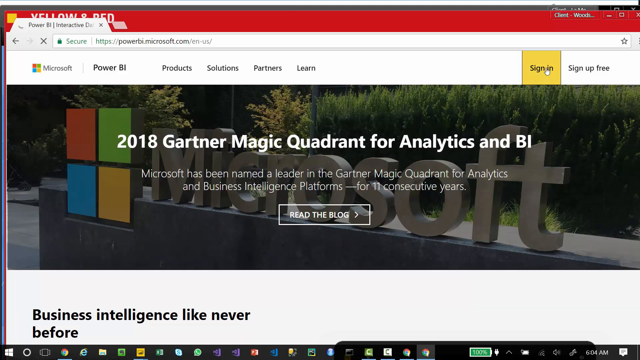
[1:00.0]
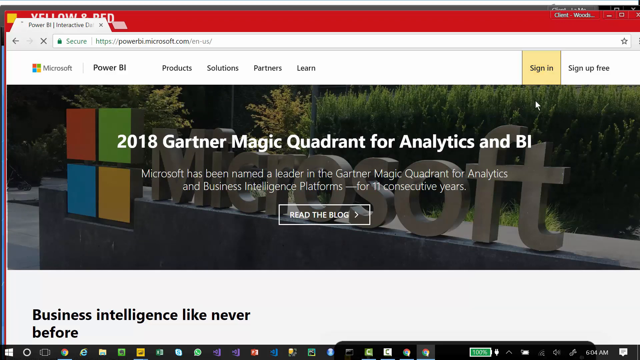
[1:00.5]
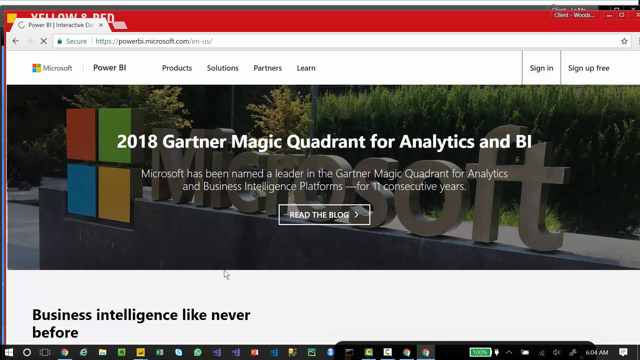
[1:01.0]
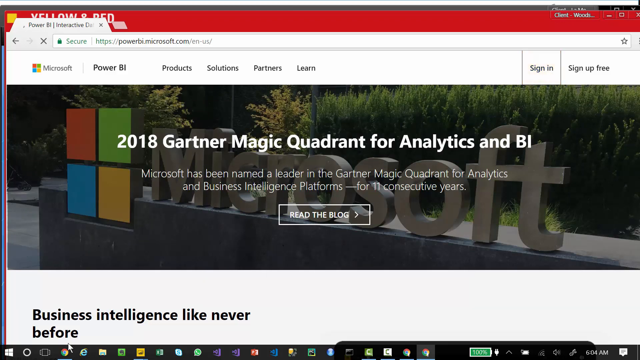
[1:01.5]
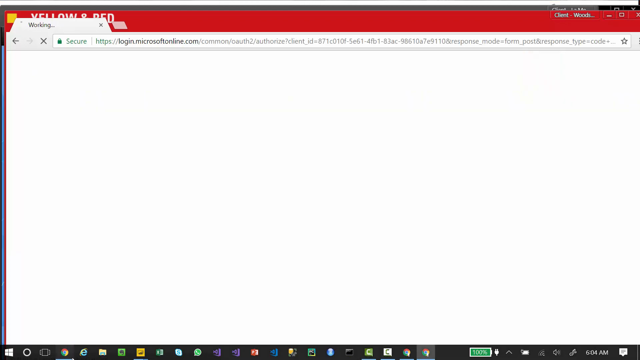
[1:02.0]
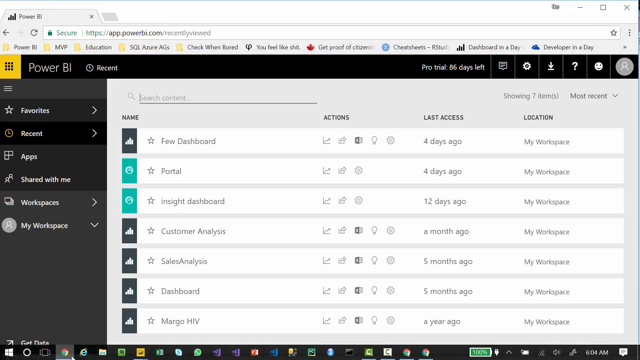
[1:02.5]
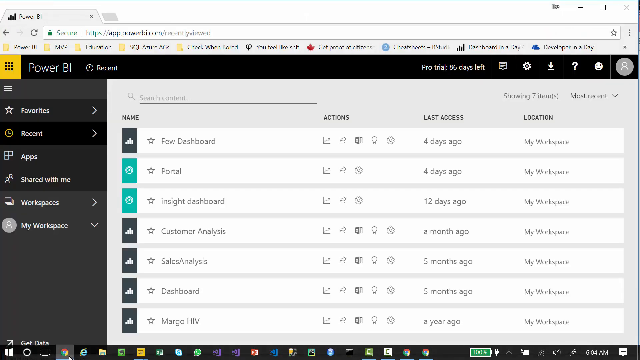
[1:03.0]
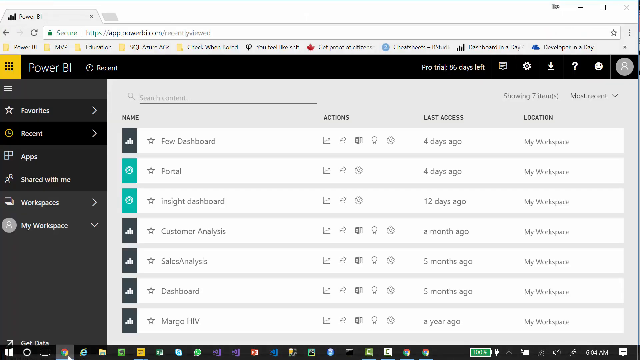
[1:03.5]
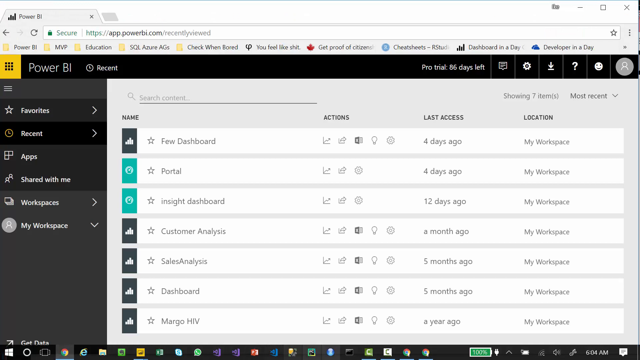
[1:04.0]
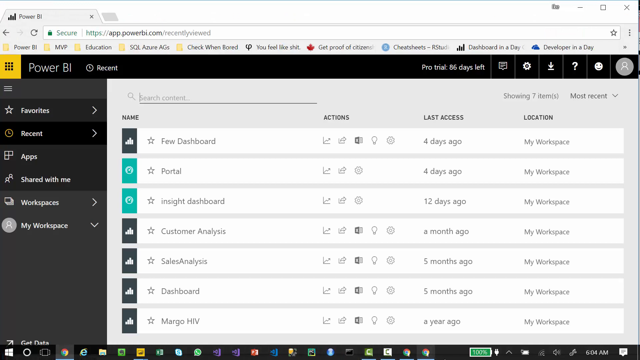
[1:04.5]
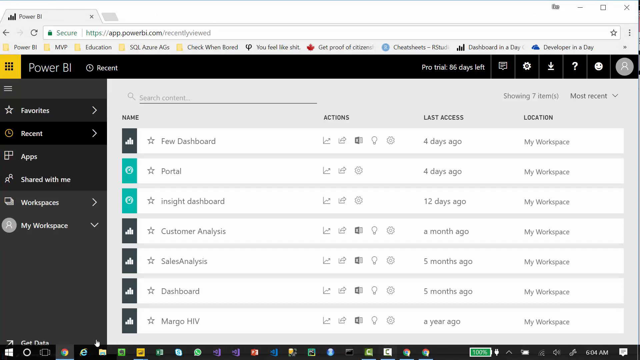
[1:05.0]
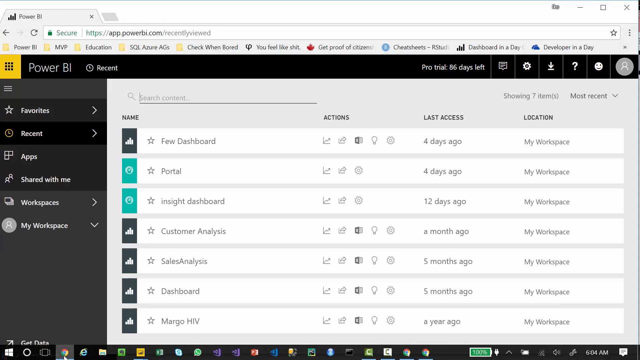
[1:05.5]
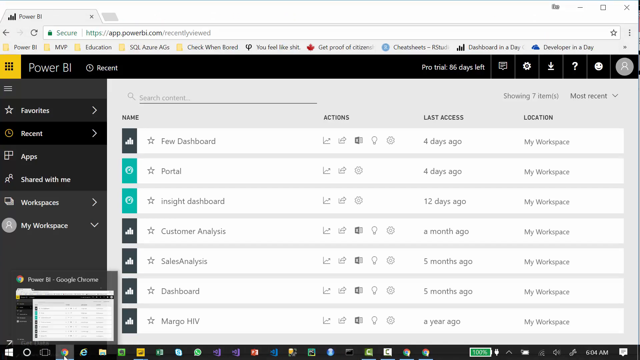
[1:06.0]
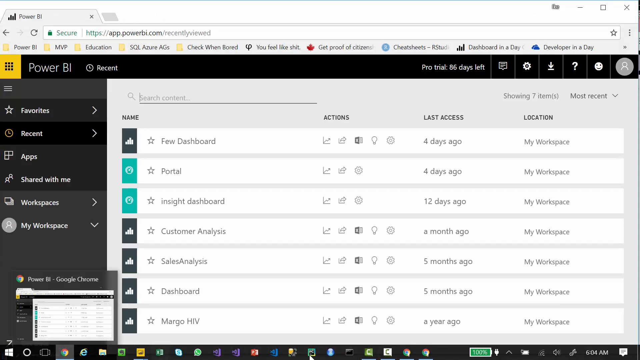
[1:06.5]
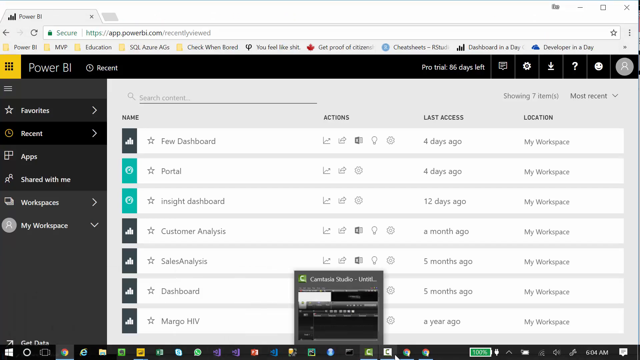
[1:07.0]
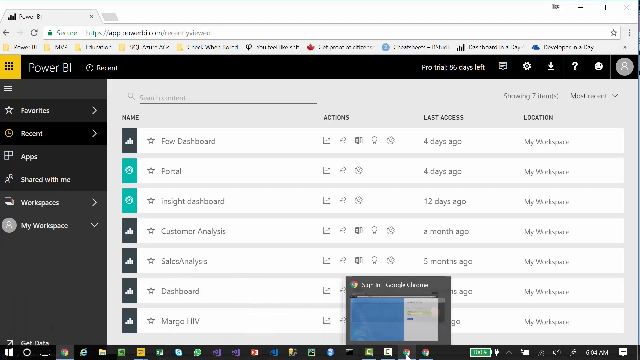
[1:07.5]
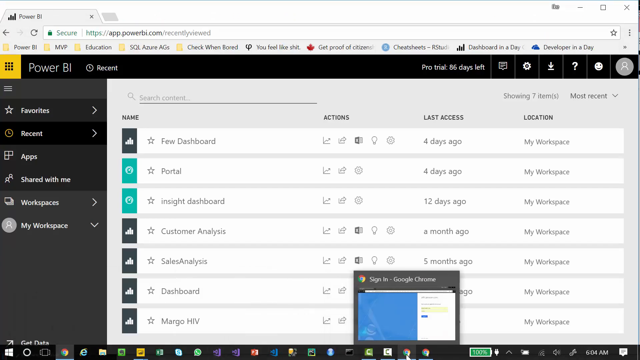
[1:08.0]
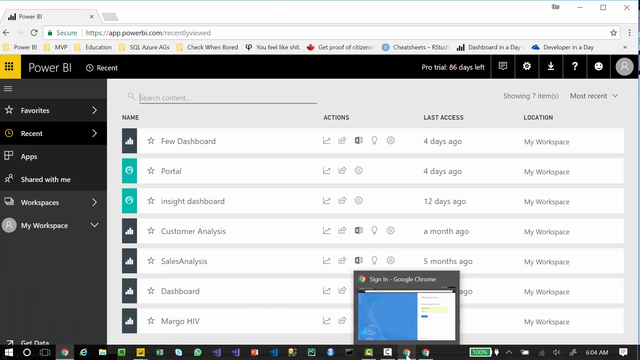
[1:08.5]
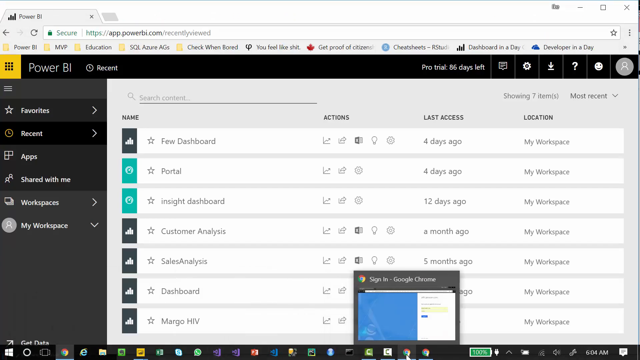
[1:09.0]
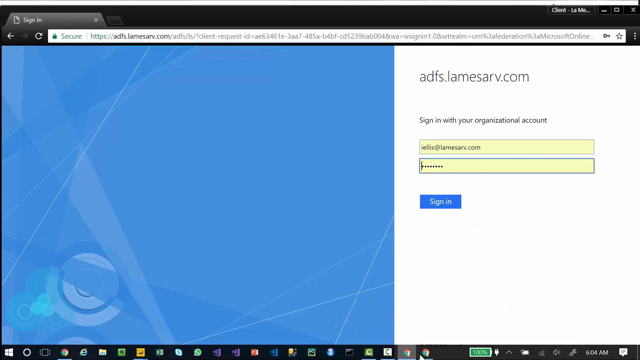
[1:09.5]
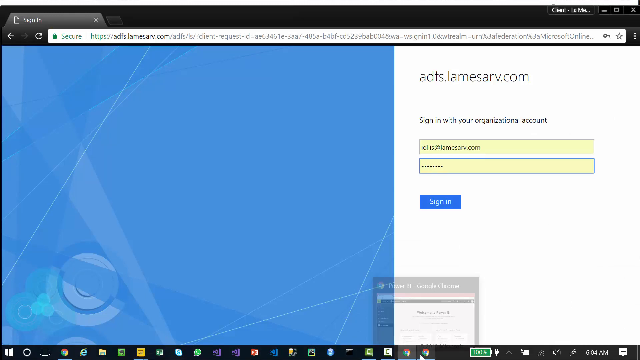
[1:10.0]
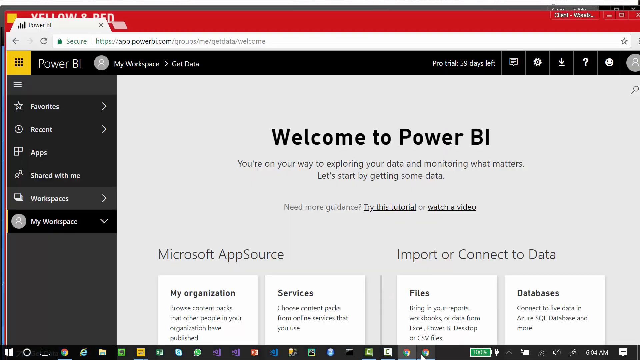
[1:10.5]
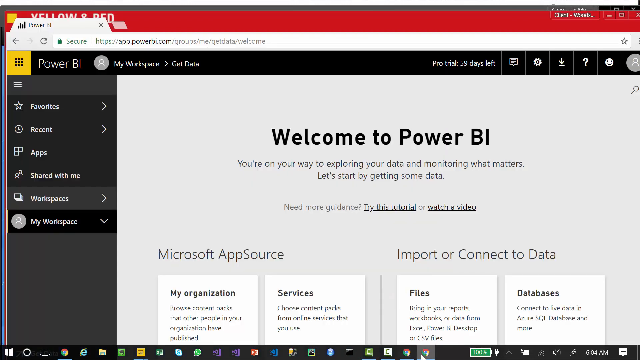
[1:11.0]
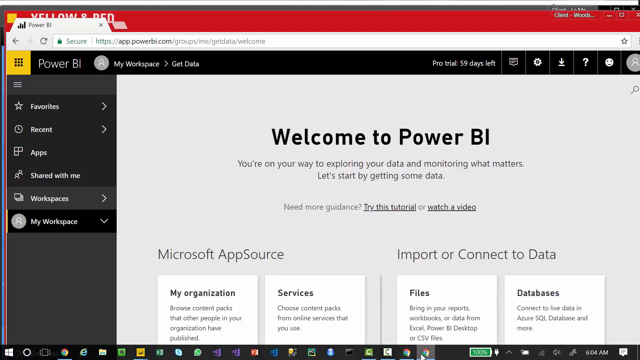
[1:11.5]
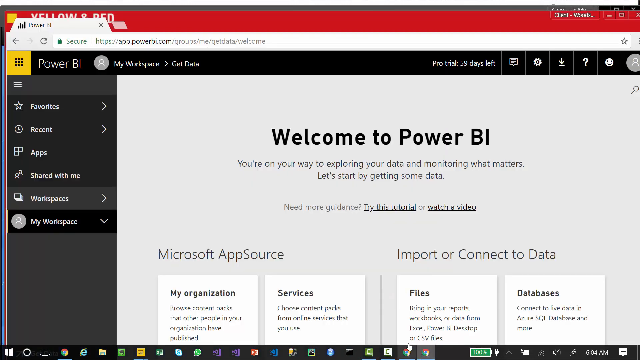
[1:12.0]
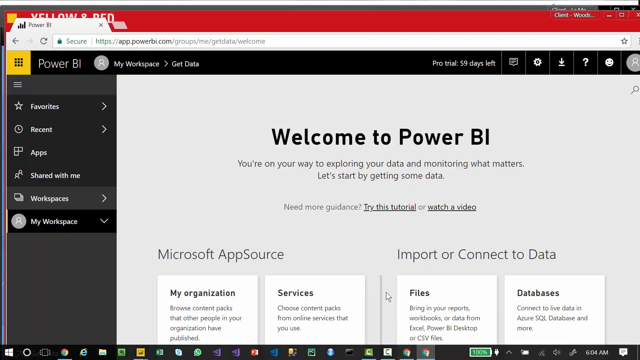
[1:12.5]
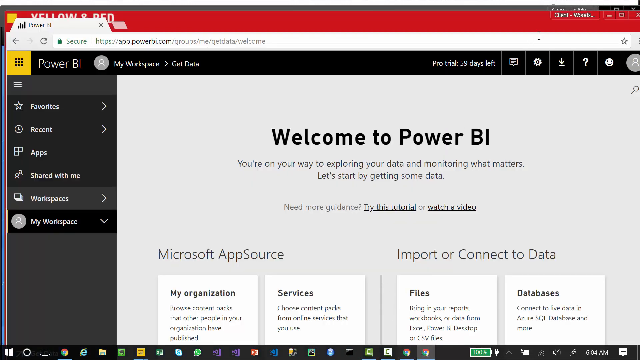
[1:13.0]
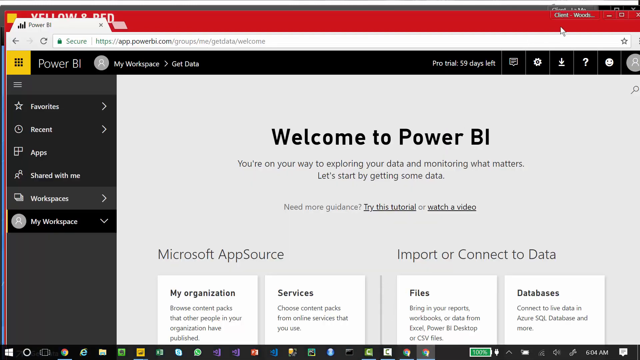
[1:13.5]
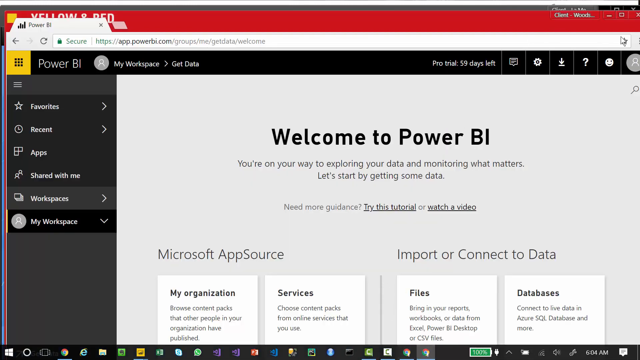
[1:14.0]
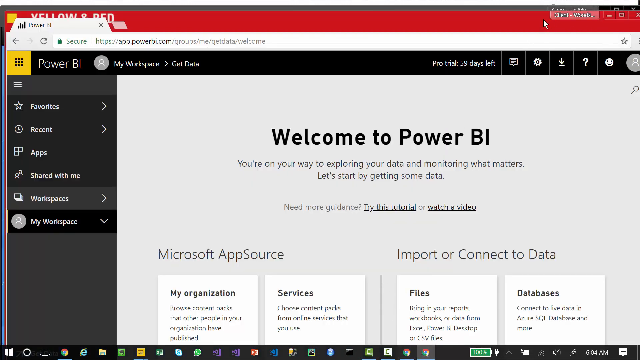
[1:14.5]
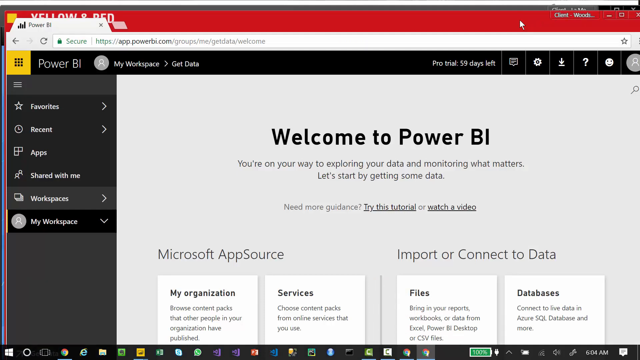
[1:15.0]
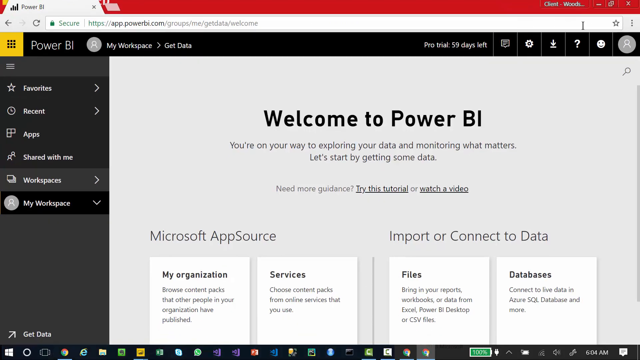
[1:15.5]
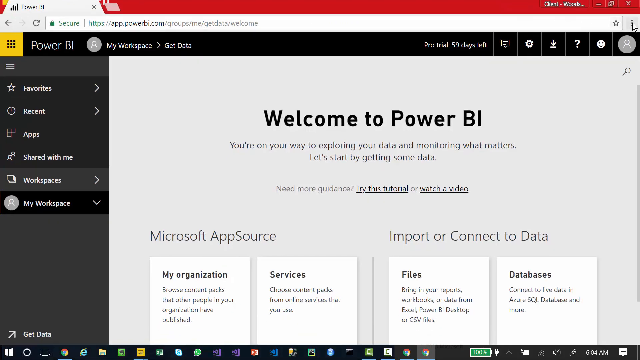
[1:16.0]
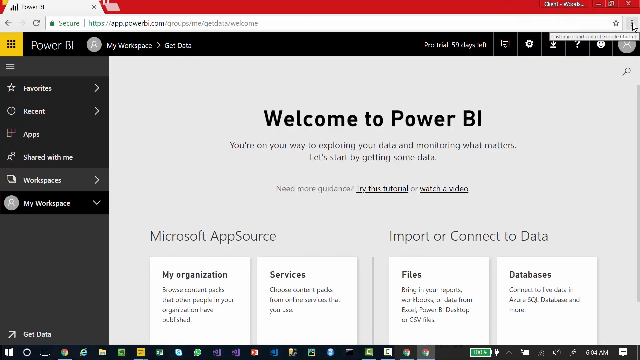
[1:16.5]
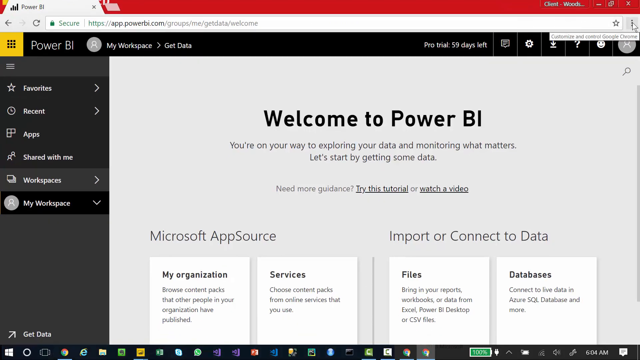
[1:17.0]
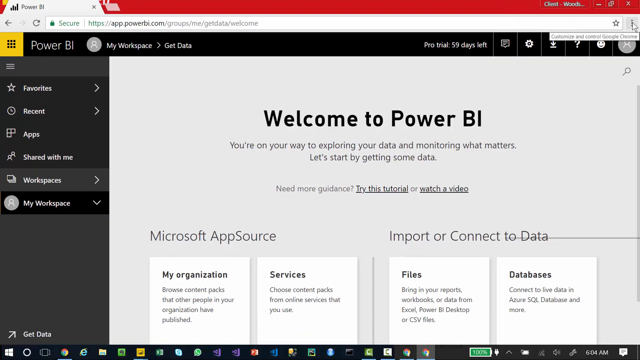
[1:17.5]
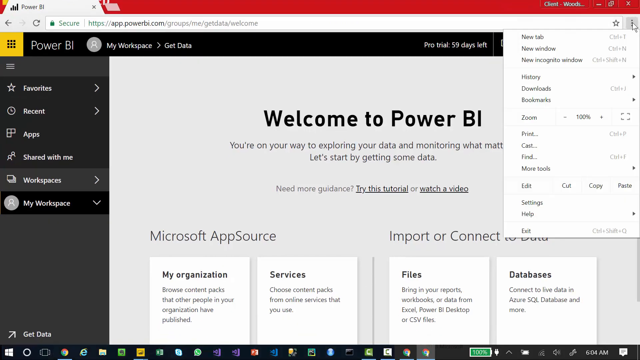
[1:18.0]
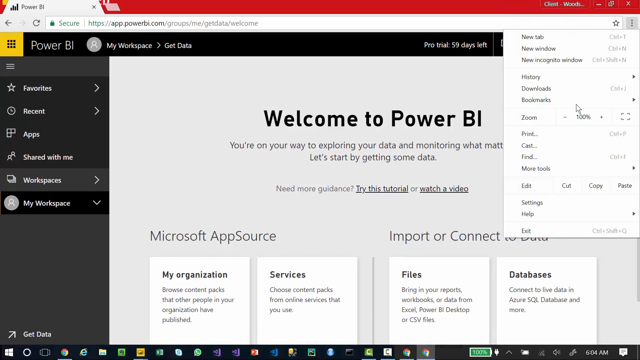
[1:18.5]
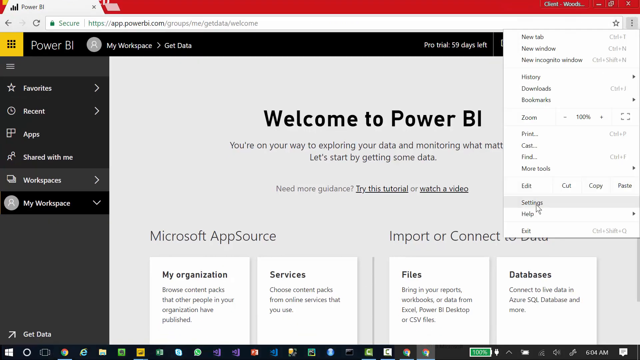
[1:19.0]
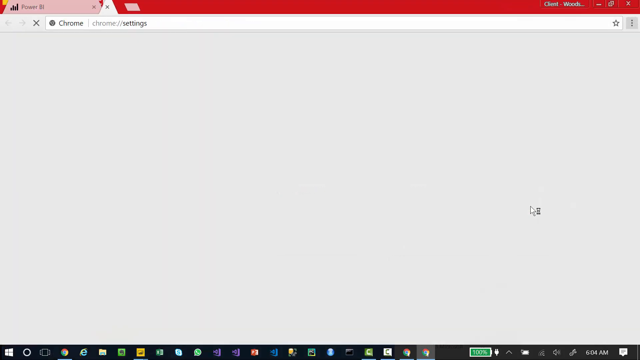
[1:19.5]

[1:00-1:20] A page for the 2018 Gartner Magic Quadrant for analytics in BI is shown, with a number of drop-down sections under a Power BI section. It says "Welcome to Power BI." The URL shows the microsoft.com website, with options for products, solutions and partners, and a sign-in option is available.